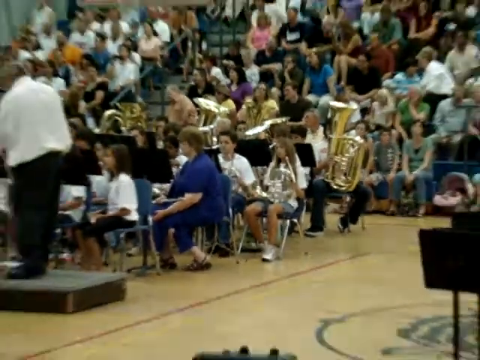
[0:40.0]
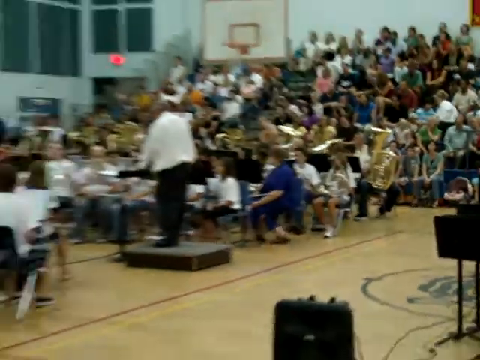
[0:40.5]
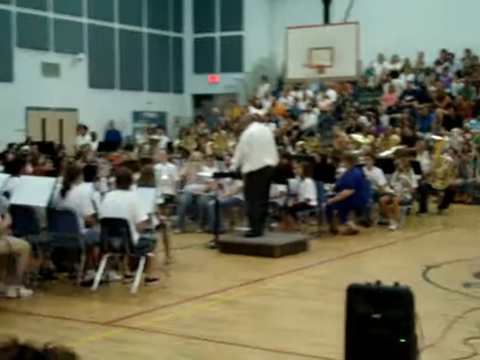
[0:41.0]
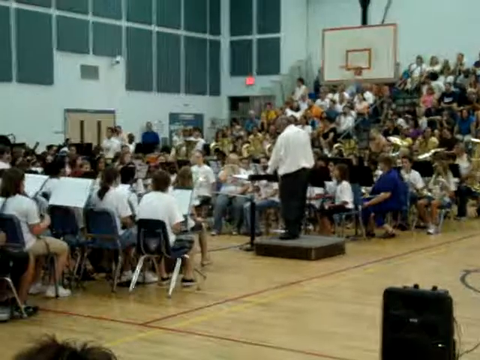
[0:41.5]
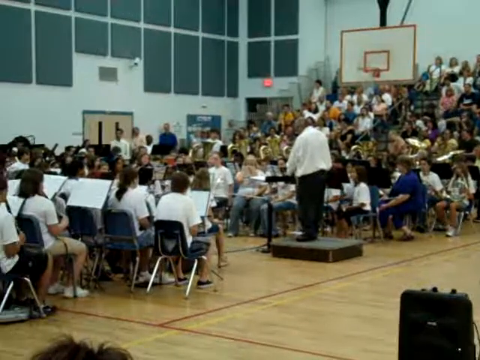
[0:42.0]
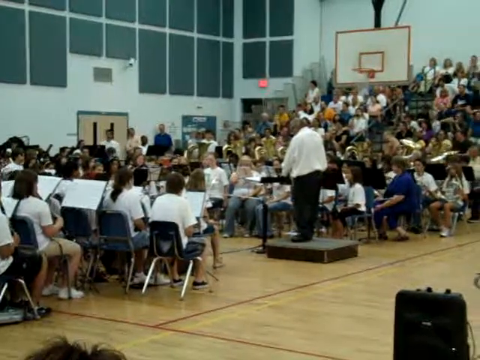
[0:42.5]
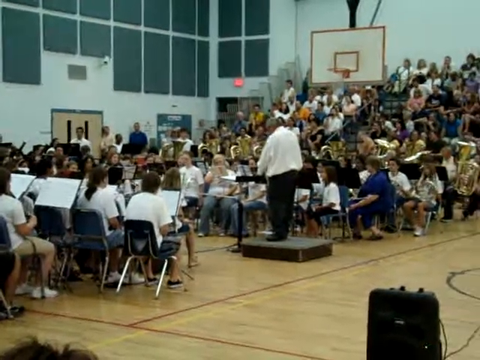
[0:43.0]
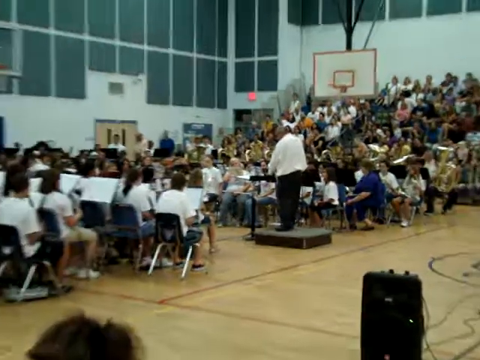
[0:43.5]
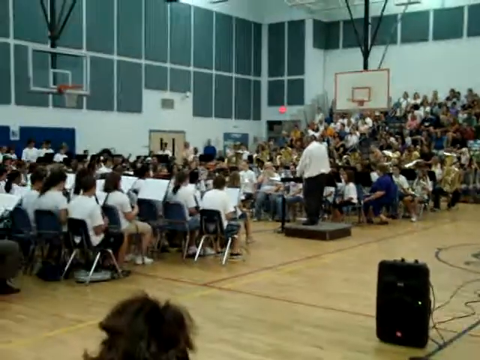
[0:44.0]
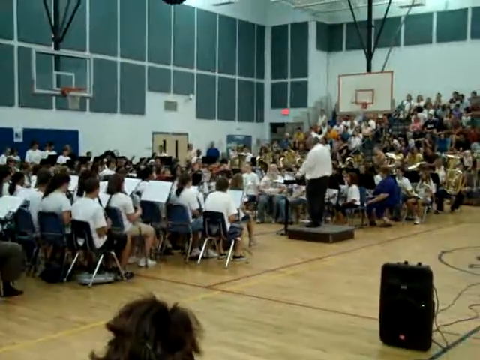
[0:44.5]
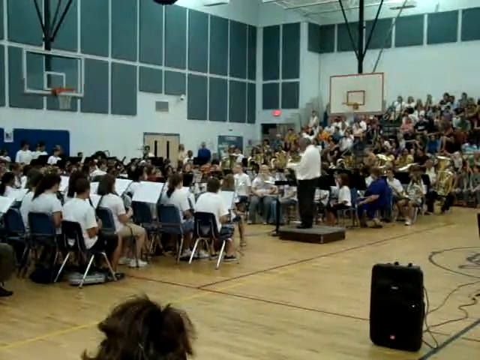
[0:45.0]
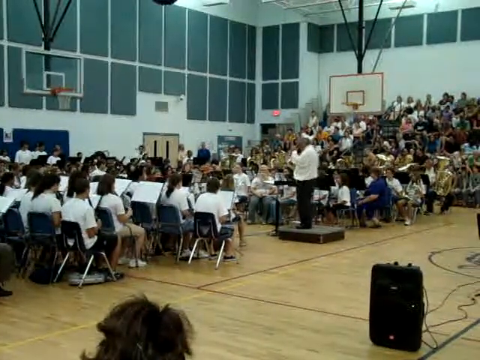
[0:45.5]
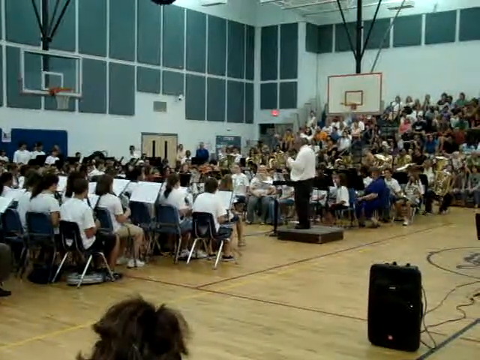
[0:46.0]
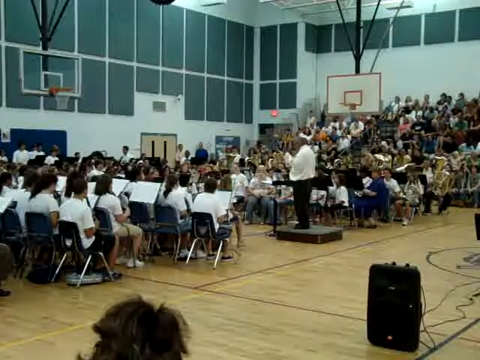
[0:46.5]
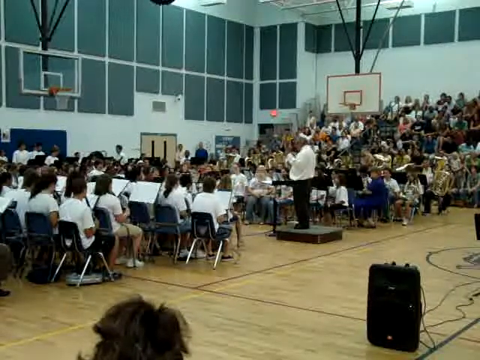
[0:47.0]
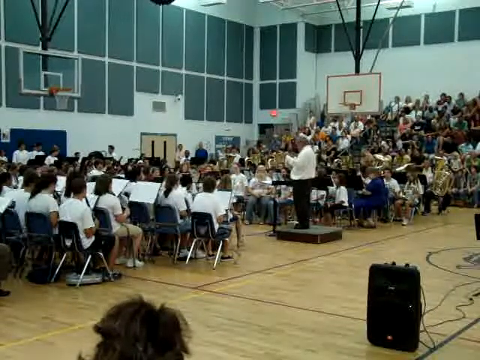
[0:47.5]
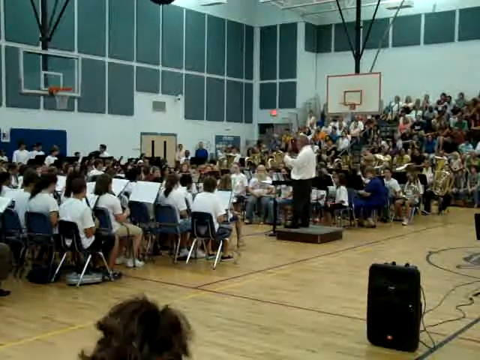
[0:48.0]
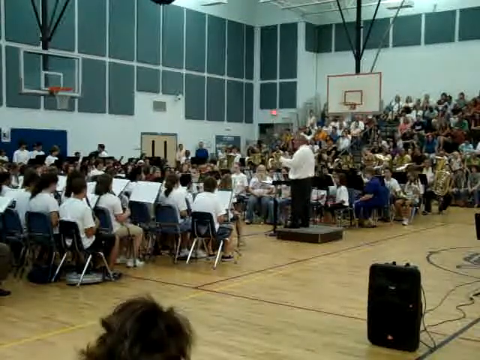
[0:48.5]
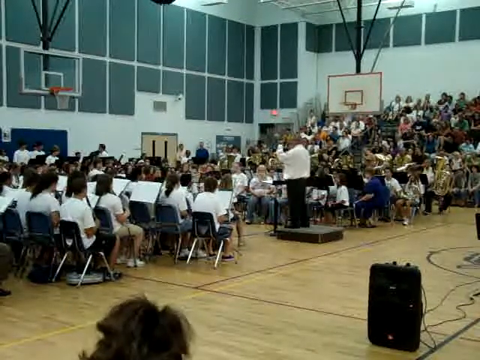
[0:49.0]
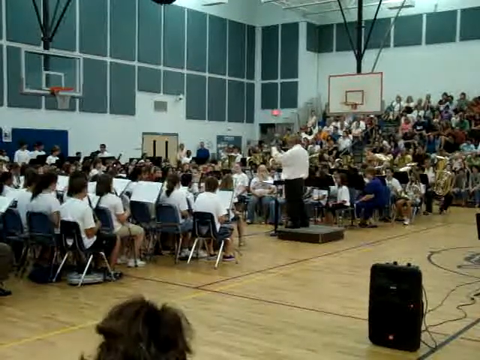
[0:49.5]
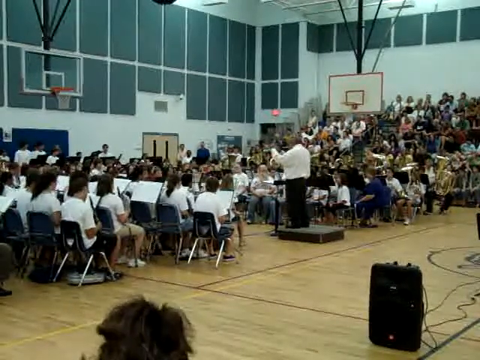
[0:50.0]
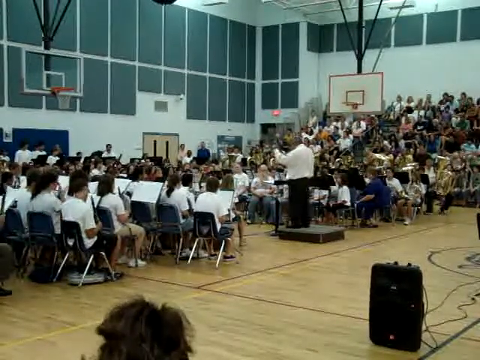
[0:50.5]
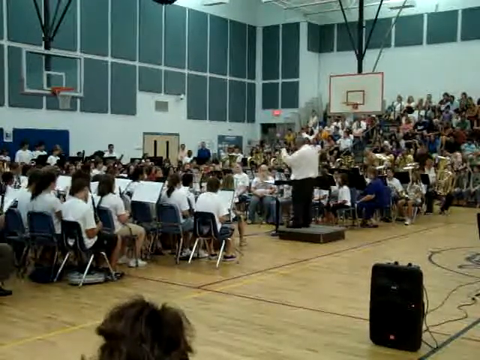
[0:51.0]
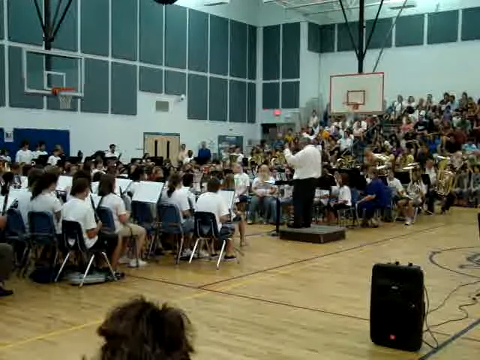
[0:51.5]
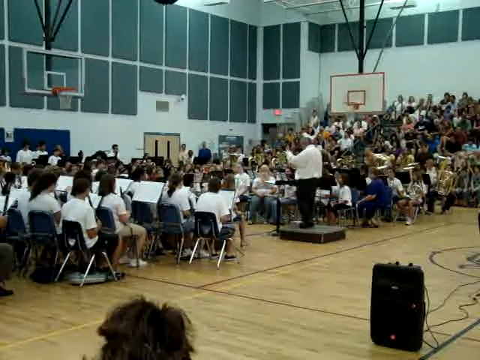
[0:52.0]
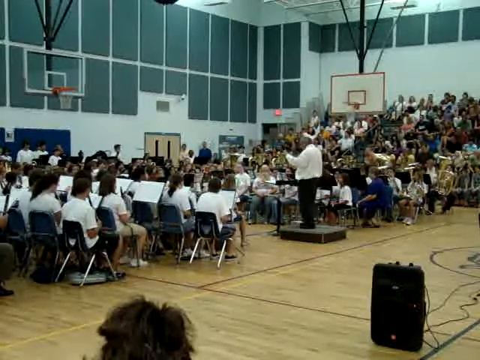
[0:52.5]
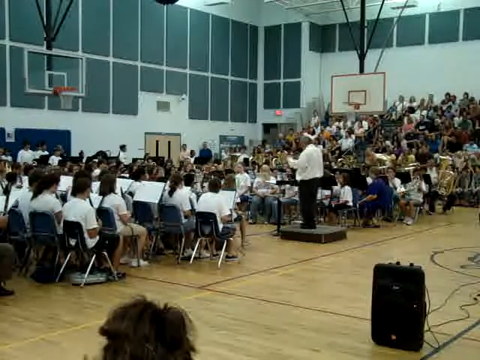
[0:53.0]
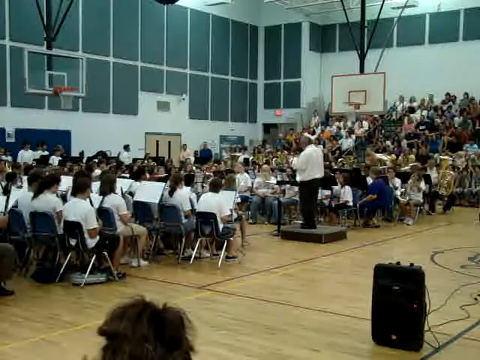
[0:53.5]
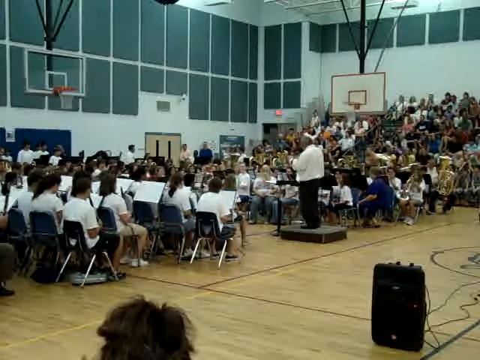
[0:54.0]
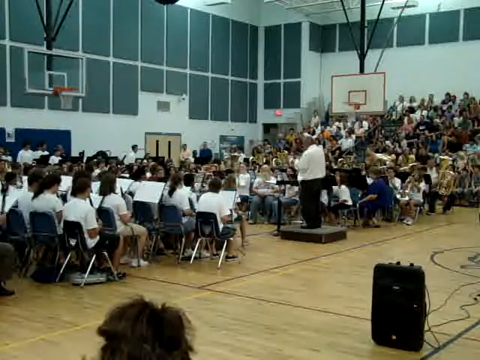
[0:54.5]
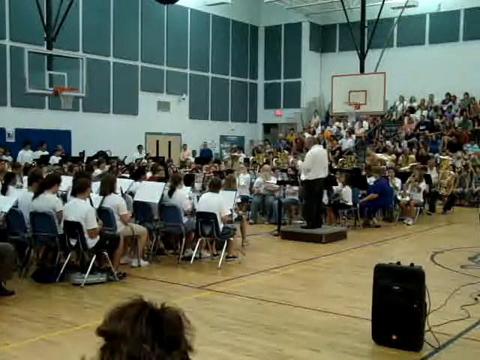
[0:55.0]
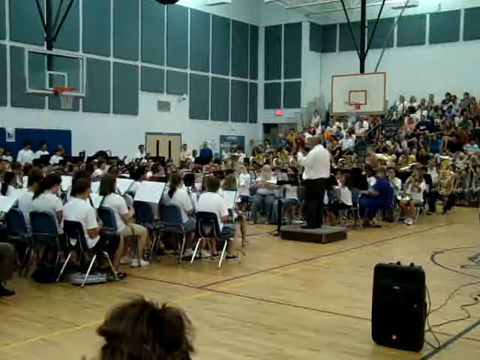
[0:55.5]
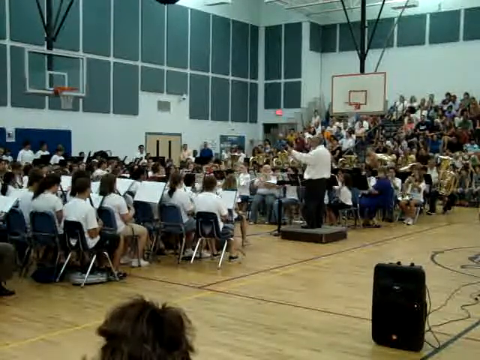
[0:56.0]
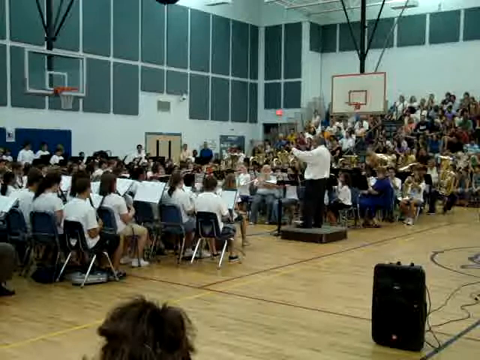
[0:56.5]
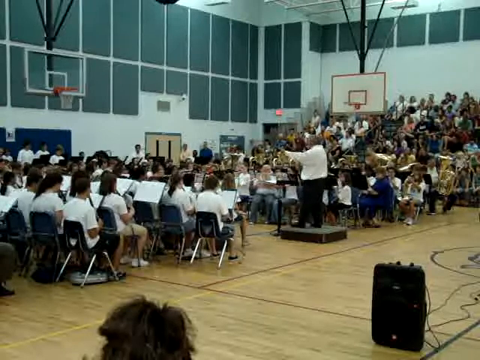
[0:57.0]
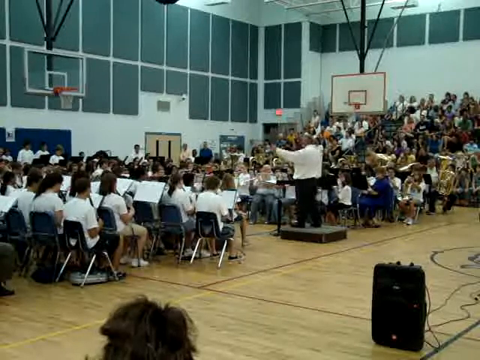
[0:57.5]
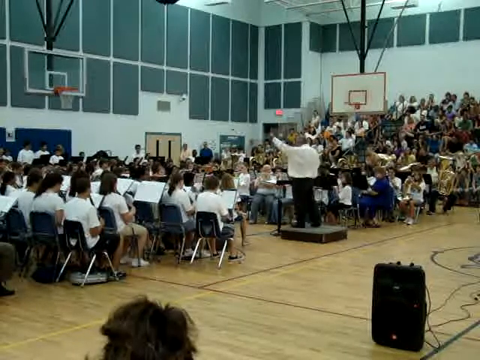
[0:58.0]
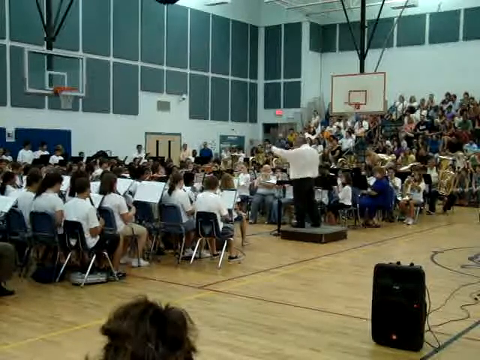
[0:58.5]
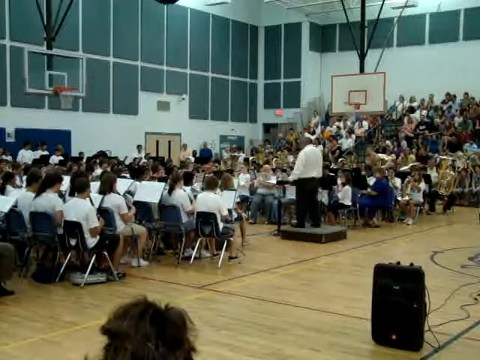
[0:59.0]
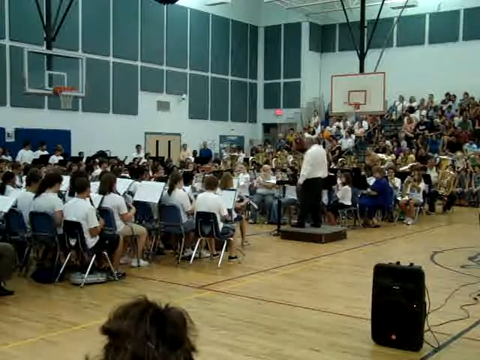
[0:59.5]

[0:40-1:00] A group of children are sitting down, pretty much everyone seated, and a bunch of people in the stadium are watching. It looks like a music performance, with a variety of different instruments. The camera zooms out slightly until the whole room is visible, showing a lot of people. A basketball hoop is slightly visible in the air, and there is a door all the way to the left side. A man in white and black is just standing there. The camera keeps zooming out, and the man moves his hand around to kind of help the children know how to do their performance. The children are looking at what seems to be sheet music on a stand. There is not much activity. An additional basketball hoop is in the top left corner of the video, and an exit sign is all the way in the background.